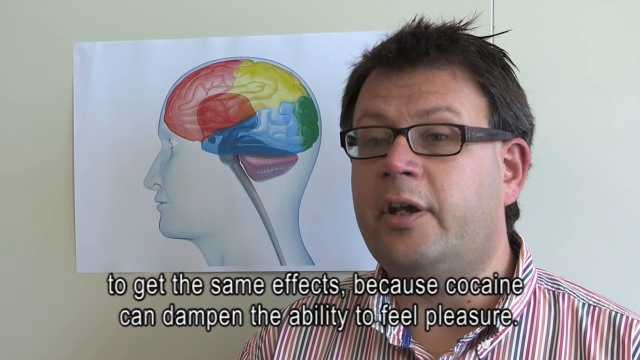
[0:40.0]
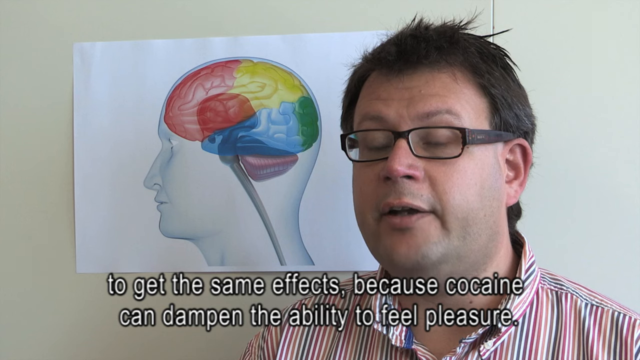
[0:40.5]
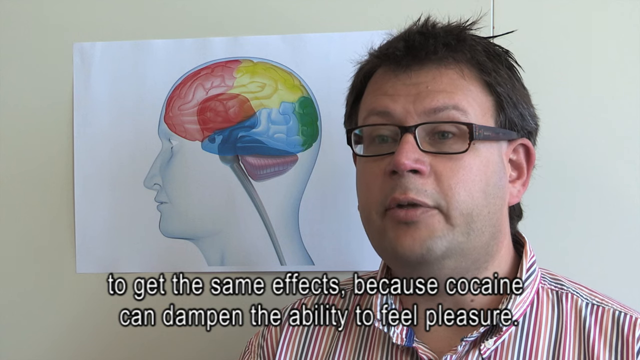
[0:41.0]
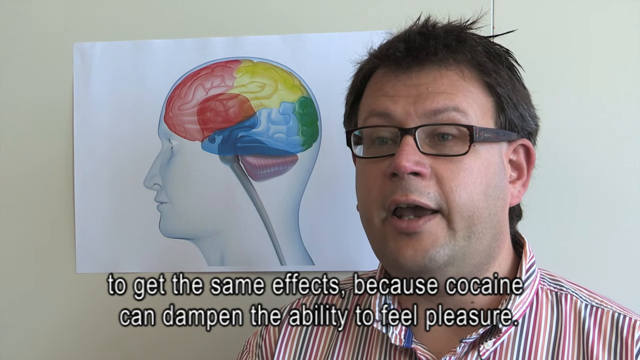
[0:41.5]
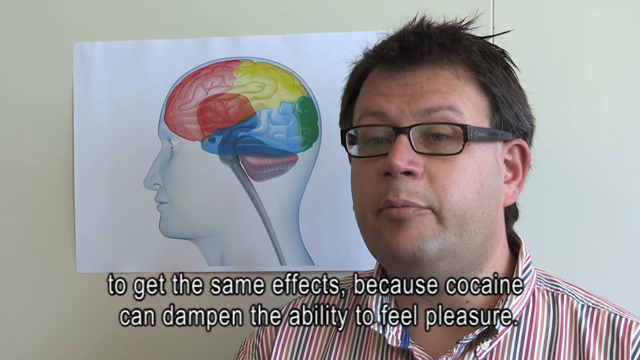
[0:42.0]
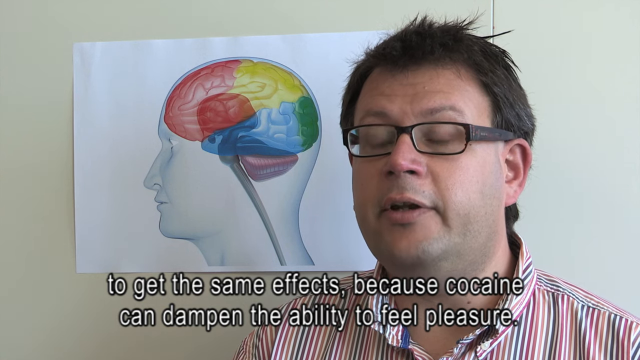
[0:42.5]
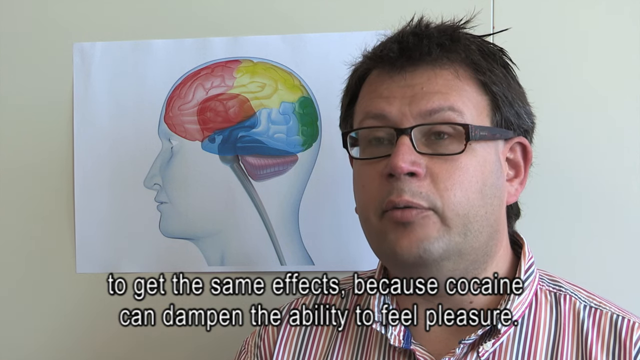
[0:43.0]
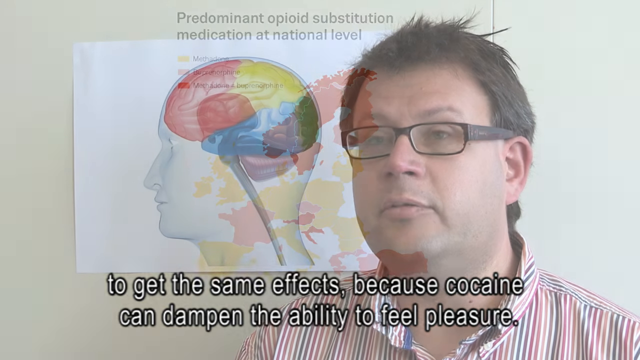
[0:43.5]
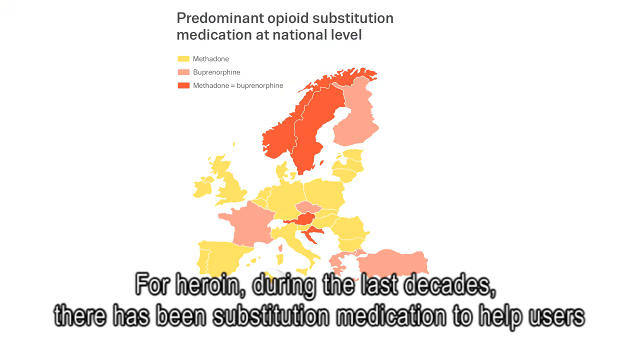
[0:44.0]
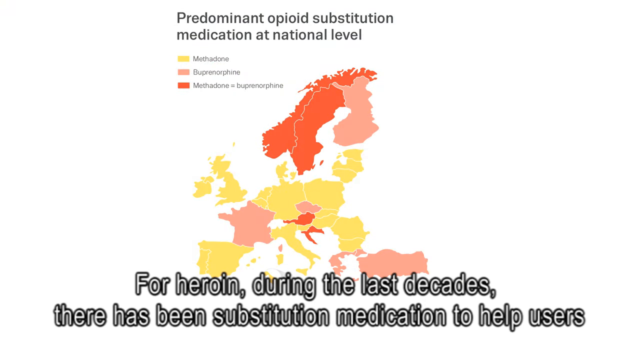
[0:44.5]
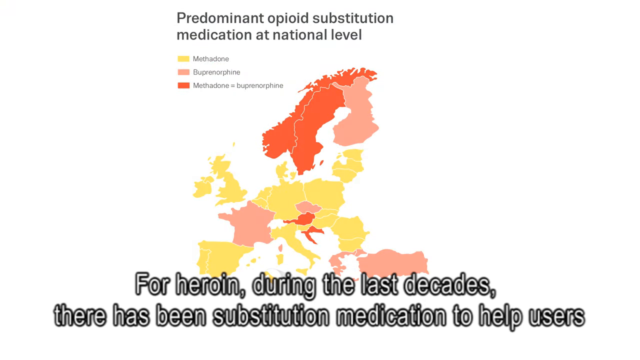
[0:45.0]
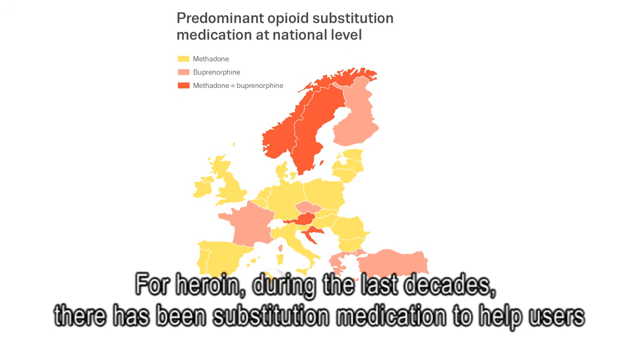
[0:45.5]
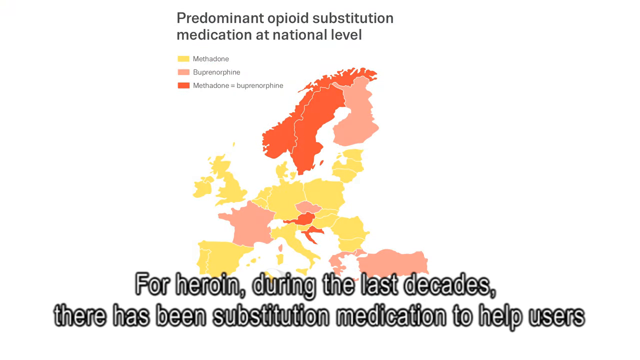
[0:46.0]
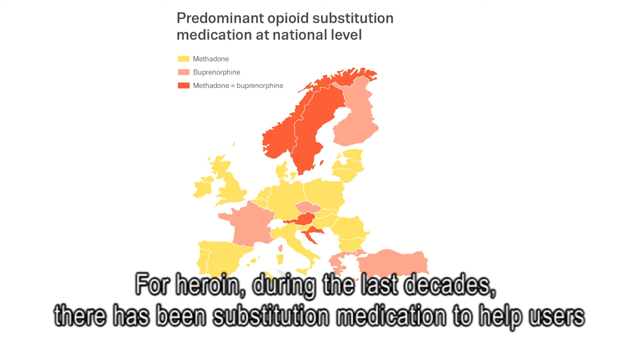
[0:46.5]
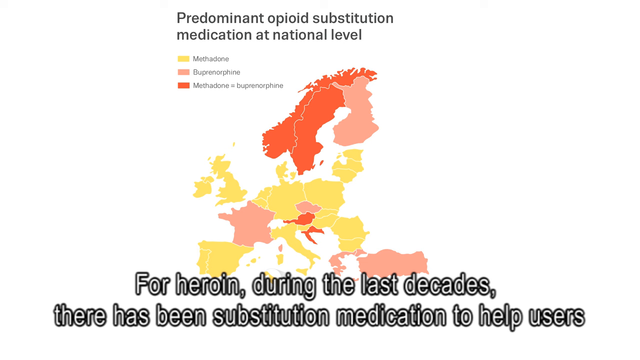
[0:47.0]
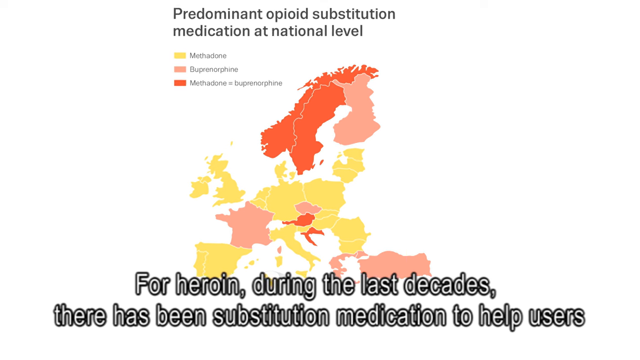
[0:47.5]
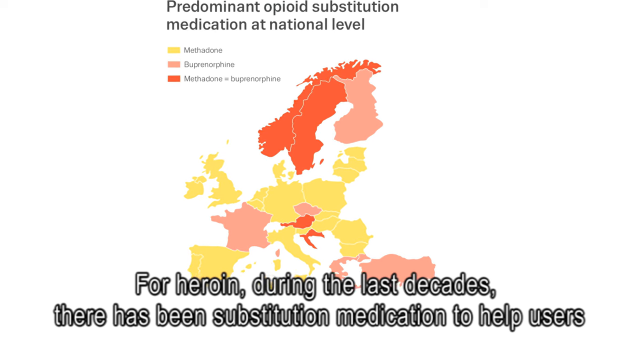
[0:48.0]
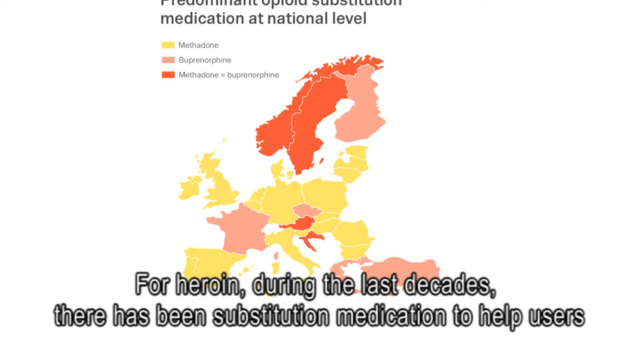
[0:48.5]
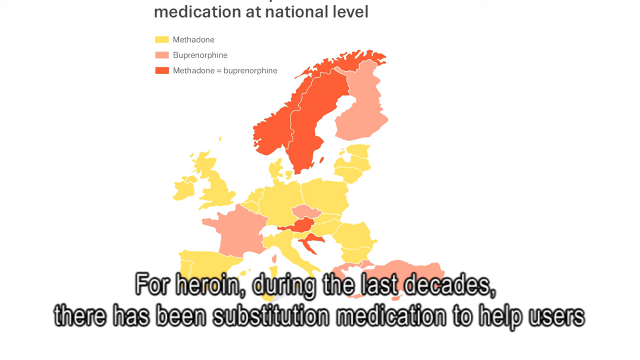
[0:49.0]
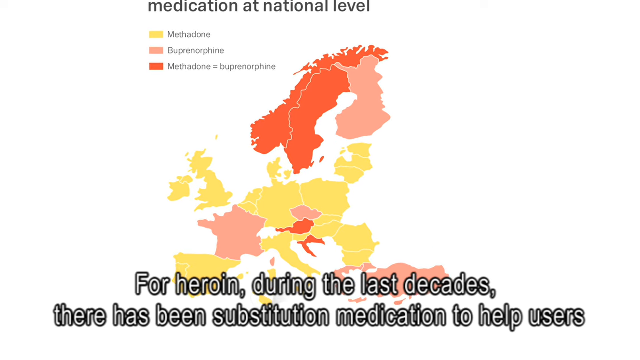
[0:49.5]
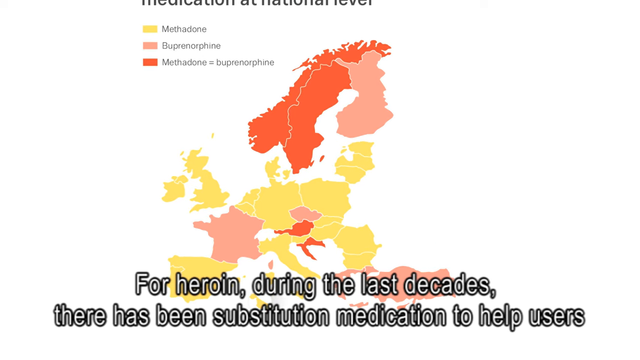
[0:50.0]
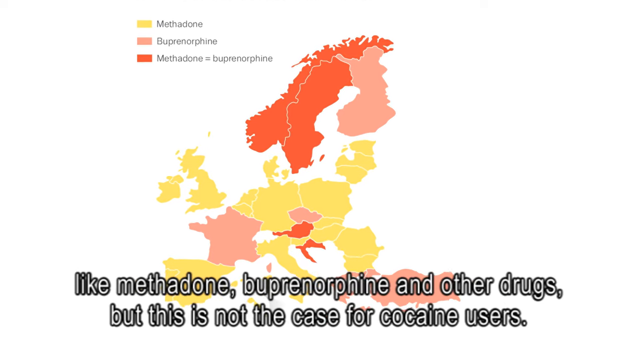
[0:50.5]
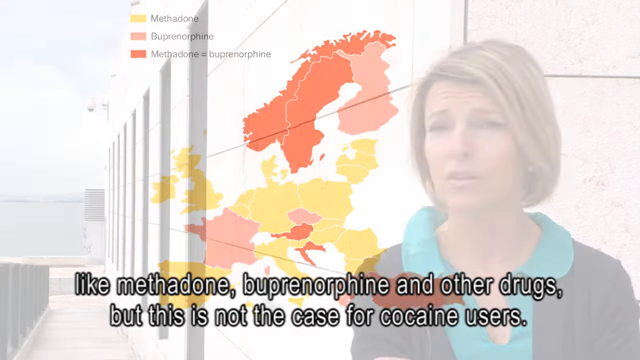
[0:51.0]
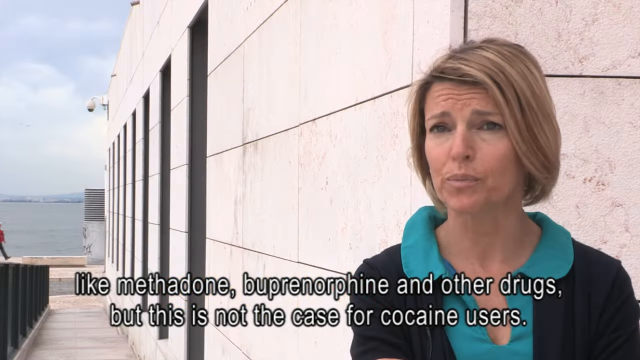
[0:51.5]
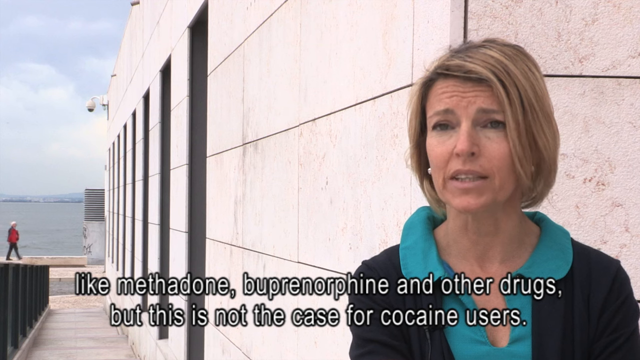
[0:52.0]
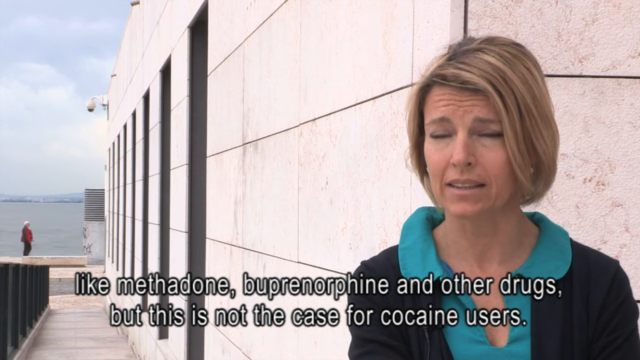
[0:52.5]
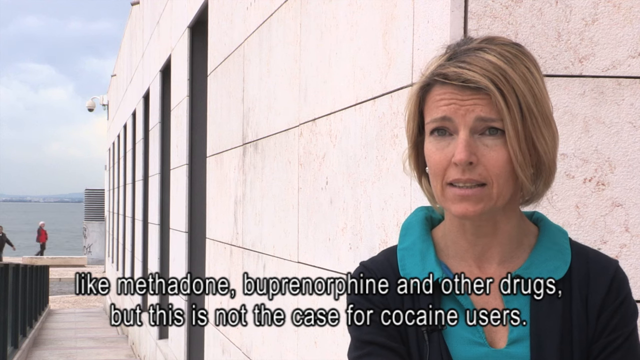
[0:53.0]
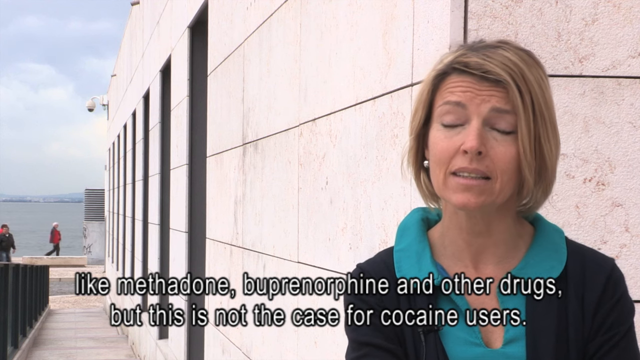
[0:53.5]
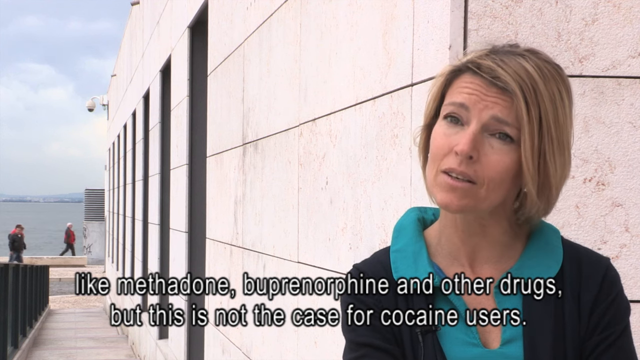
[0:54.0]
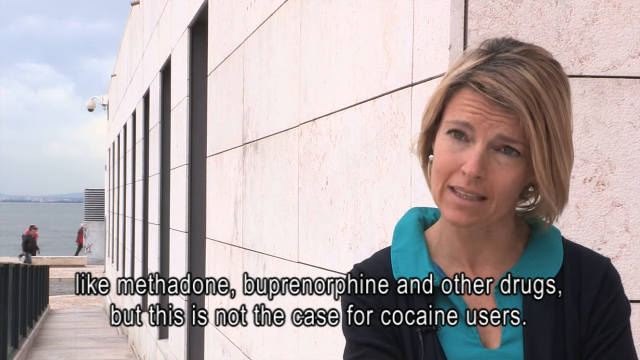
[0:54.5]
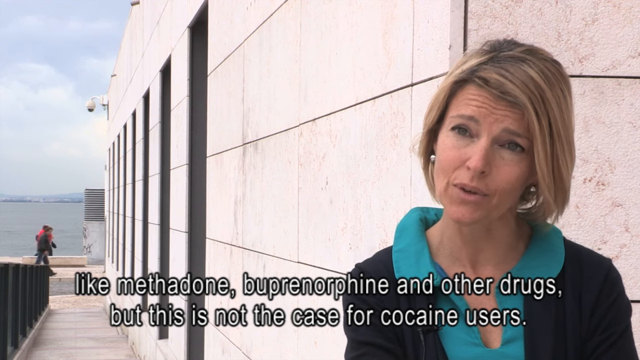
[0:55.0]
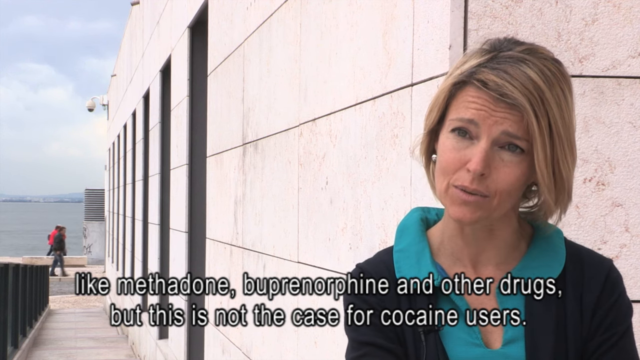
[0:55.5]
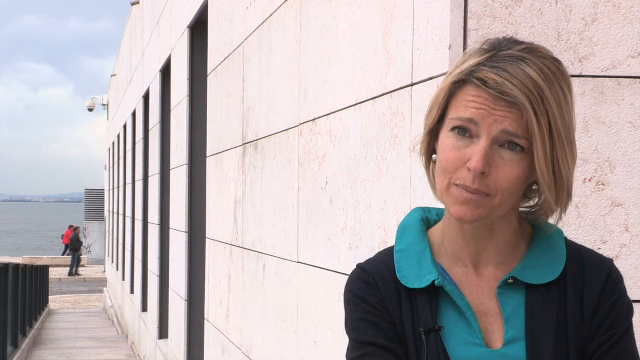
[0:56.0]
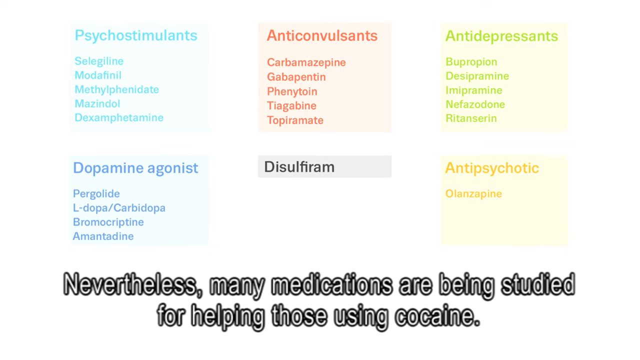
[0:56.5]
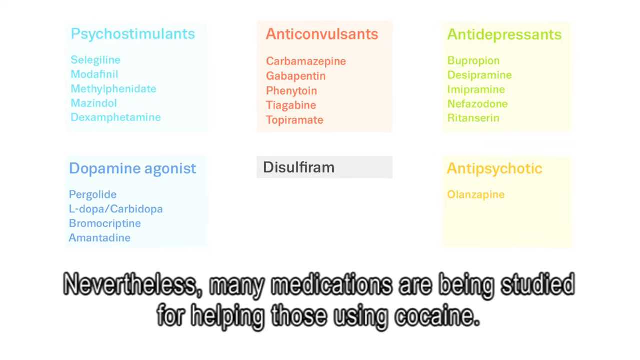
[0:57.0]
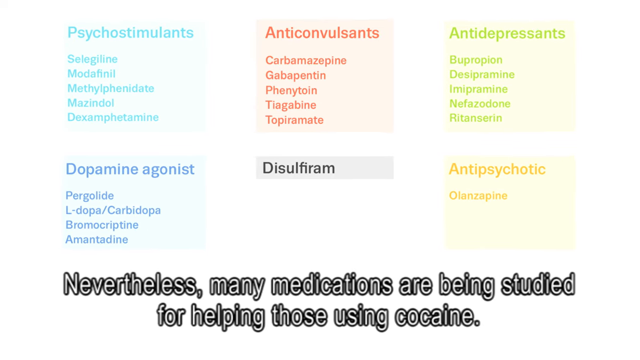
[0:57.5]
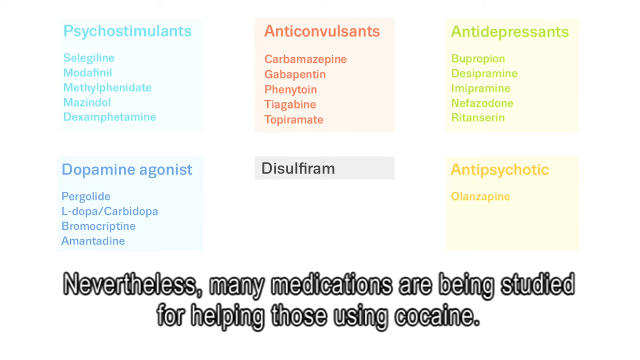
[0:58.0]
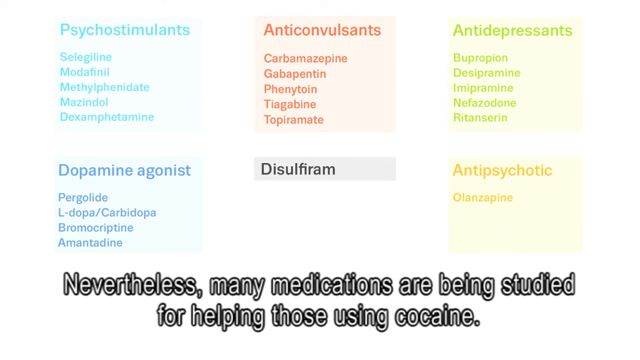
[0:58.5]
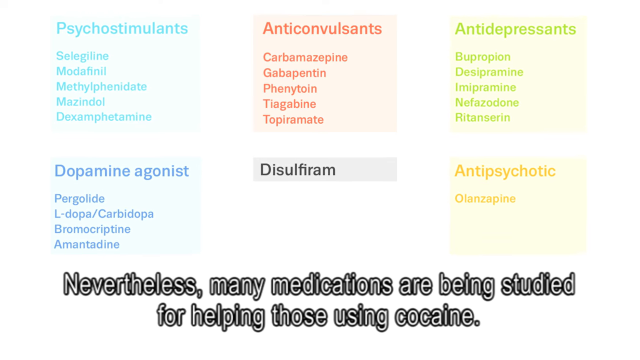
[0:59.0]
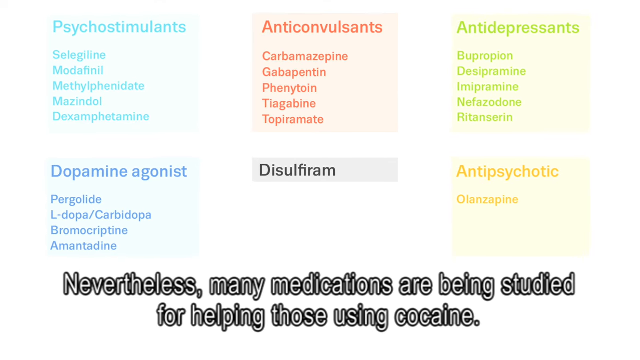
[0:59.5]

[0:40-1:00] Pictures of a white powdery substance that looks like cocaine are shown. A woman who looks like she may be a doctor wears a black sweater with a kind of teal collar. An older man, probably in his 40s, with a chubby, unshaven face, short, spiky, kind of blackish dark brown hair and small black glasses that may be reading glasses, wears a striped shirt and talks sincerely. Beside him is a picture of a brain that looks like it is taped on a wall: a white picture with the outline of a man's face and the parts of the brain in different colors, red, yellow, blue, green and pinkish, apparently showing different parts of the brain. He seems to be some type of doctor, professor or scientist.